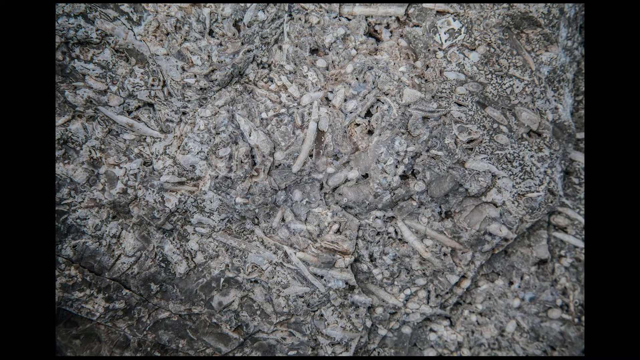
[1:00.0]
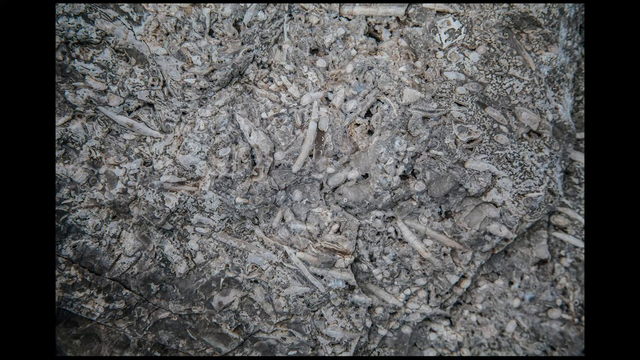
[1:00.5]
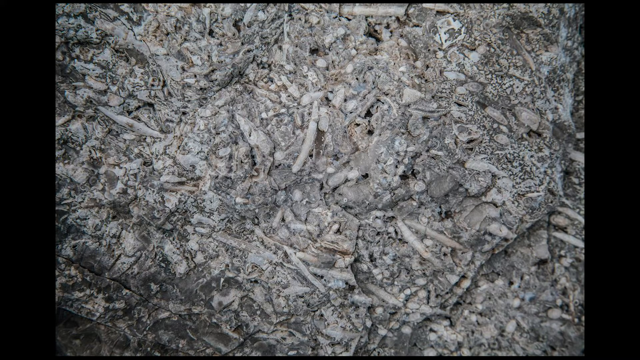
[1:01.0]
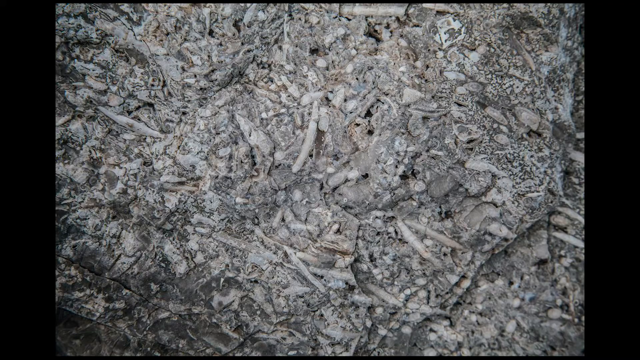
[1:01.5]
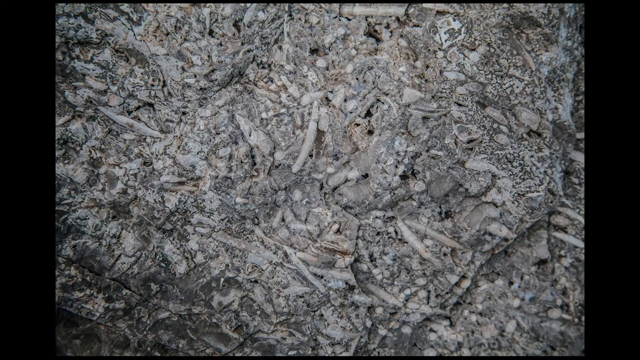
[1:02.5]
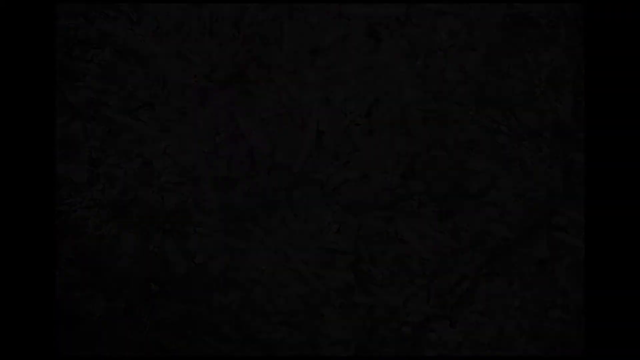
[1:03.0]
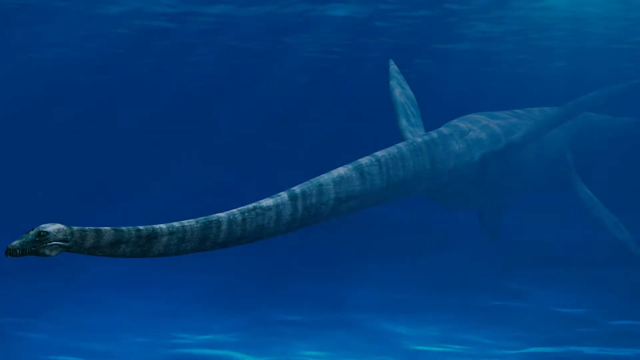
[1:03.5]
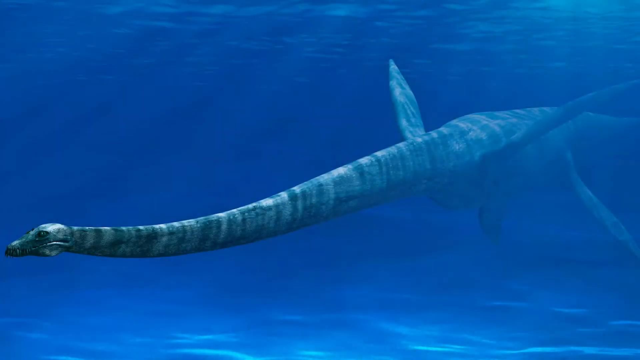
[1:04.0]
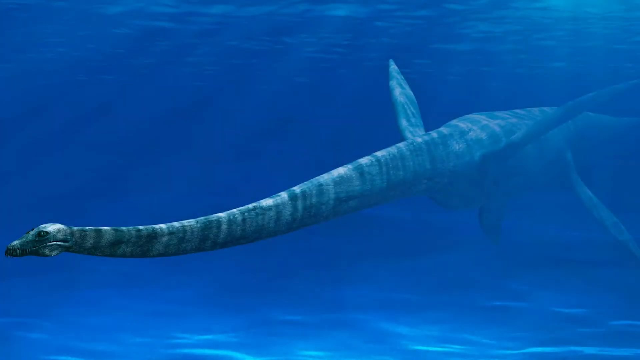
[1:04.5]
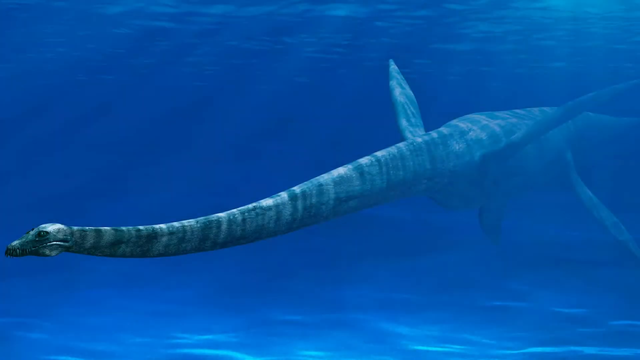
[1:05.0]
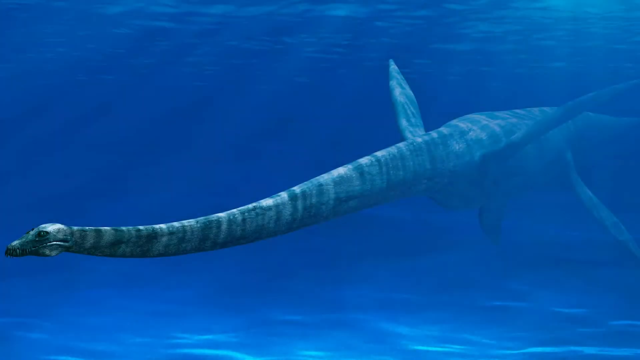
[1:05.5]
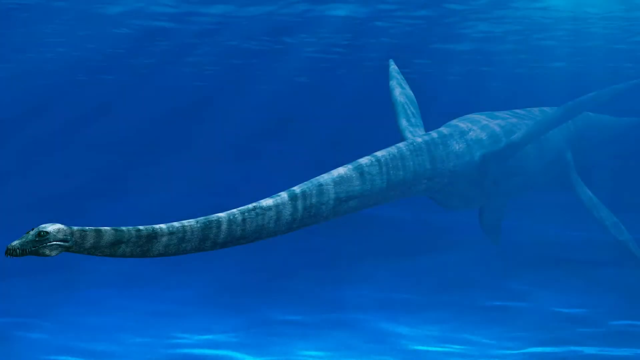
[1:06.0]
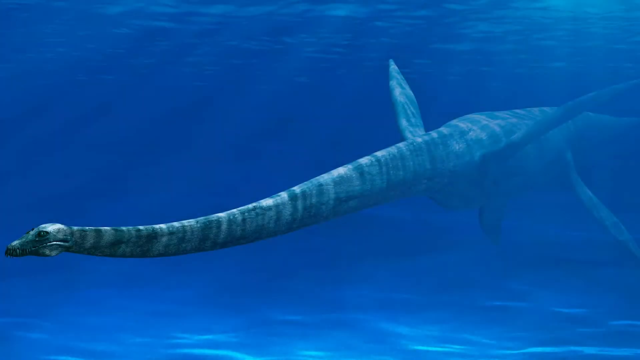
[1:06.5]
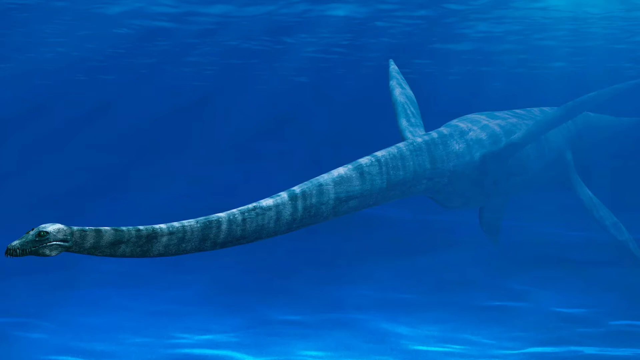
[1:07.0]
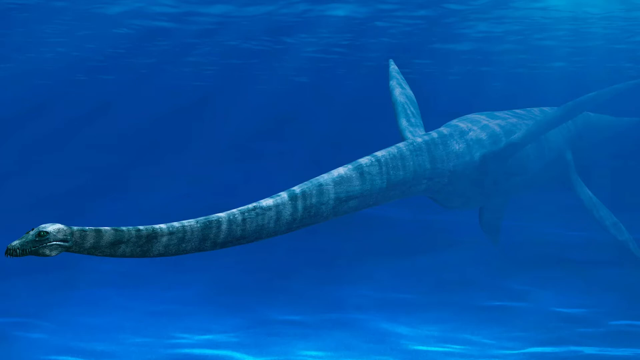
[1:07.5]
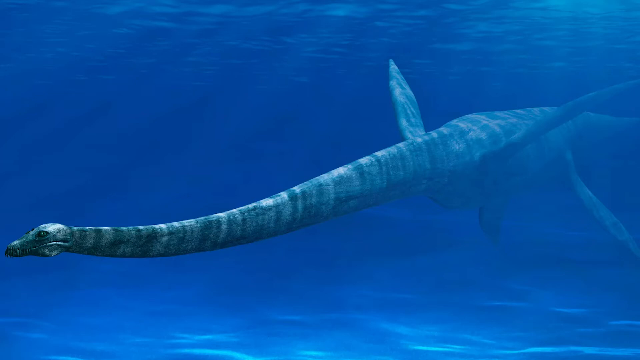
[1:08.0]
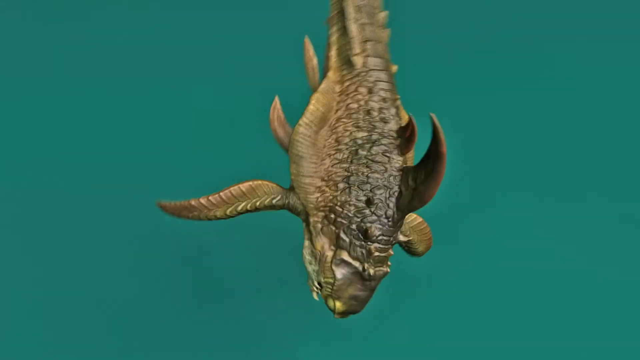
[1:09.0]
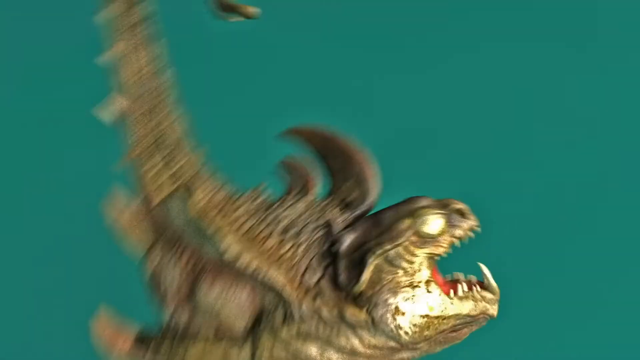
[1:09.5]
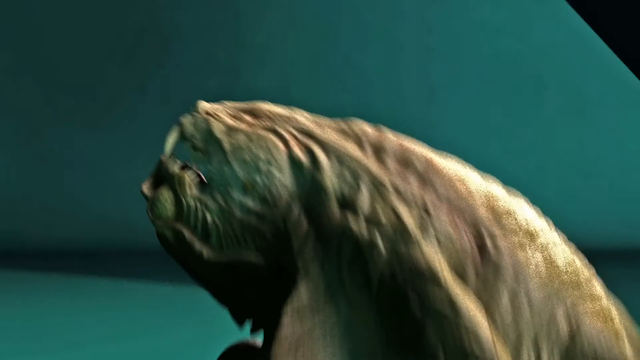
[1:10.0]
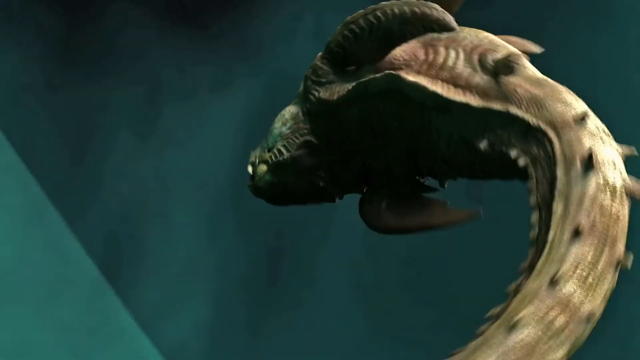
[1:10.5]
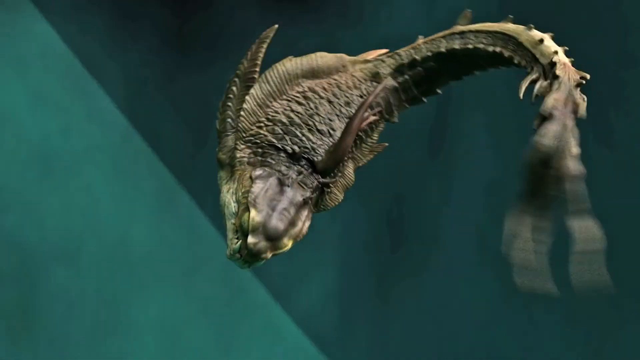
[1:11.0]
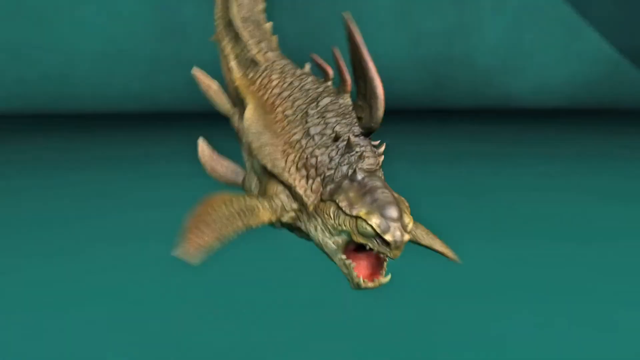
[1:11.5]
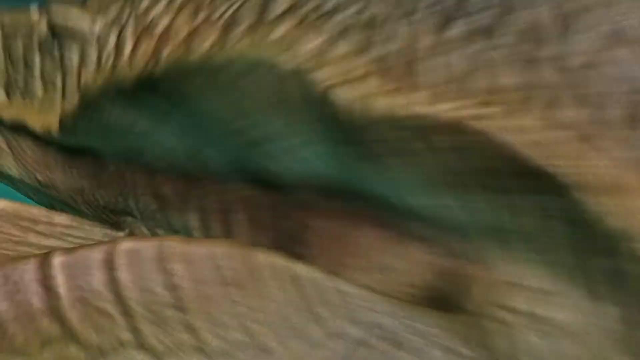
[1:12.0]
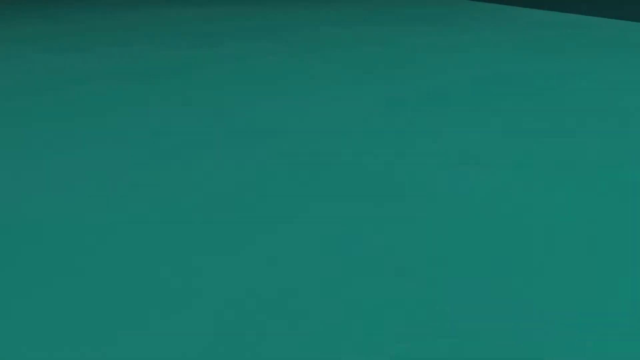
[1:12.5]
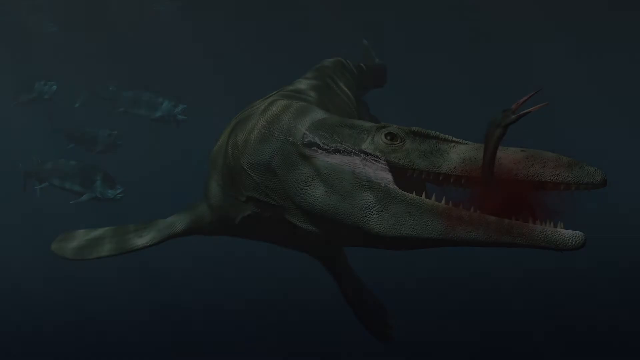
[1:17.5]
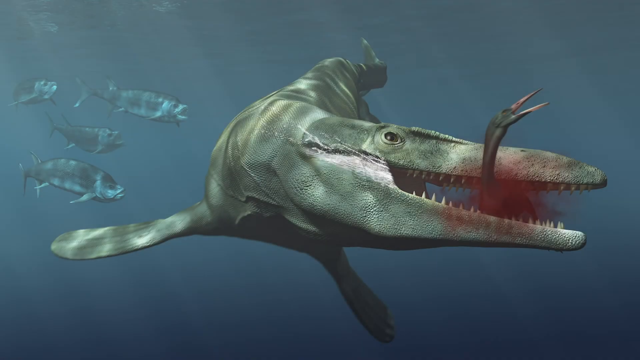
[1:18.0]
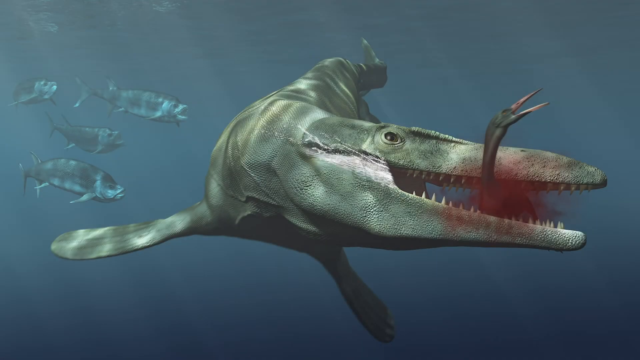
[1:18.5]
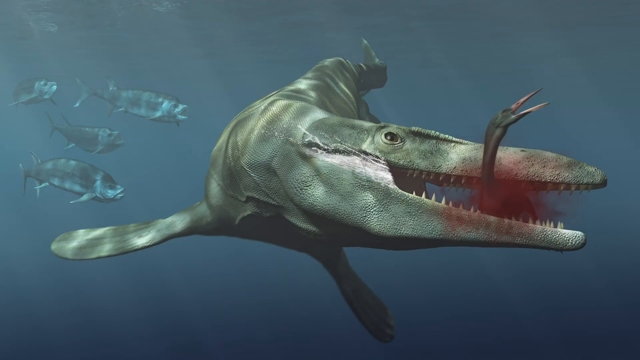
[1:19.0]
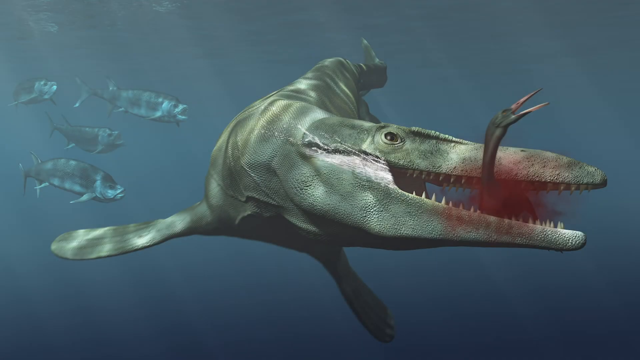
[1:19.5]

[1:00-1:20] Piles of white rubble are stacked on top of each other, looking like the side of a rock face: a bunch of white rocks with shapes of rocks and bones sticking out of them. The view switches to another picture of the long-necked sea creature, which takes up most of the view, underwater with blue water all around it. Its elongated neck stretches from the left end of the picture to about two-thirds of the way to the right. Its neck and body are a lighter blue than the surrounding water, with darker blue-gray stripes going down its neck, and its face is a darker, dark gray color. It appears to have four flippers: two raised up, forming a V with its body, and two more hanging down the sides, further back.